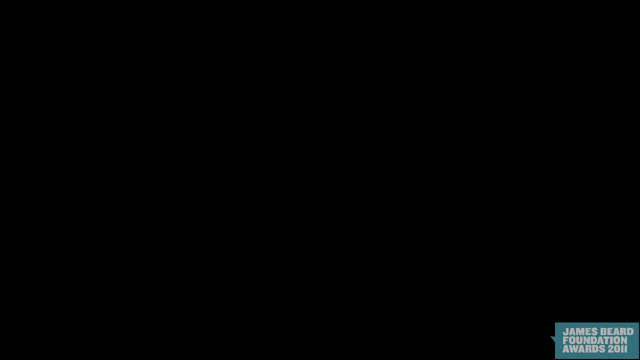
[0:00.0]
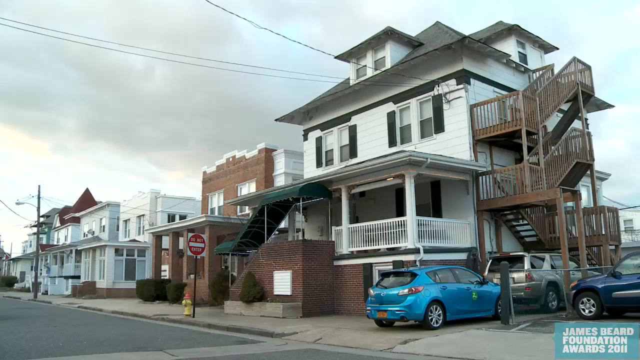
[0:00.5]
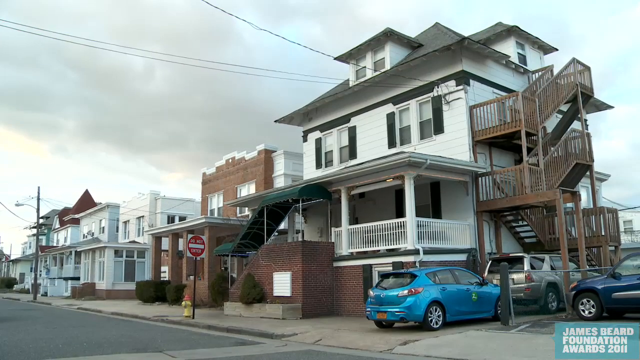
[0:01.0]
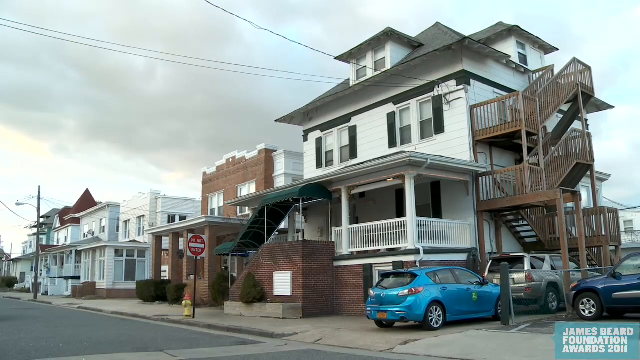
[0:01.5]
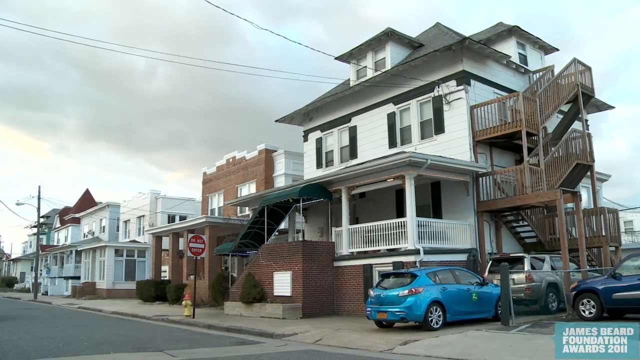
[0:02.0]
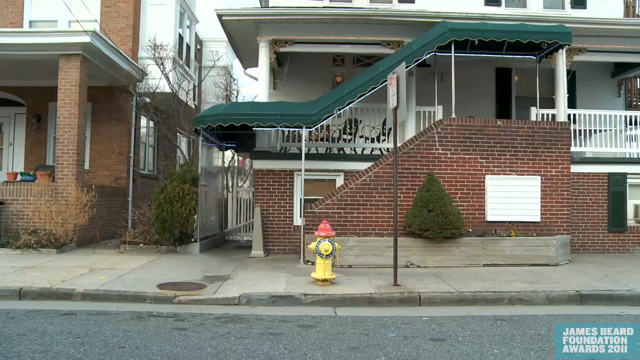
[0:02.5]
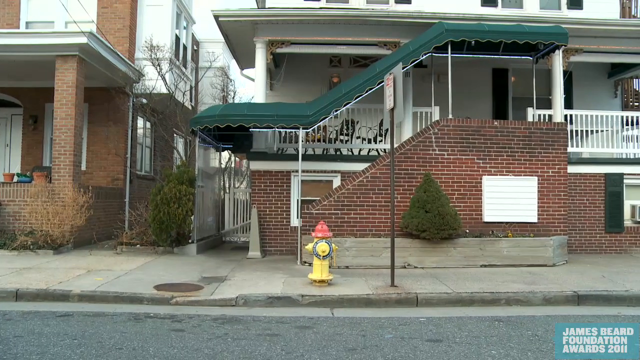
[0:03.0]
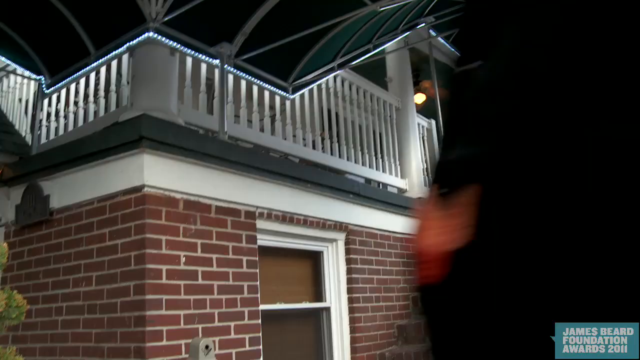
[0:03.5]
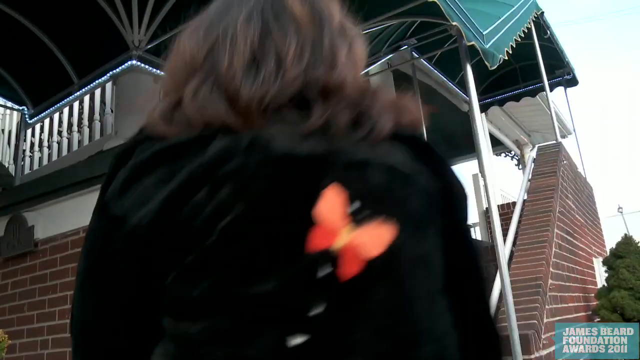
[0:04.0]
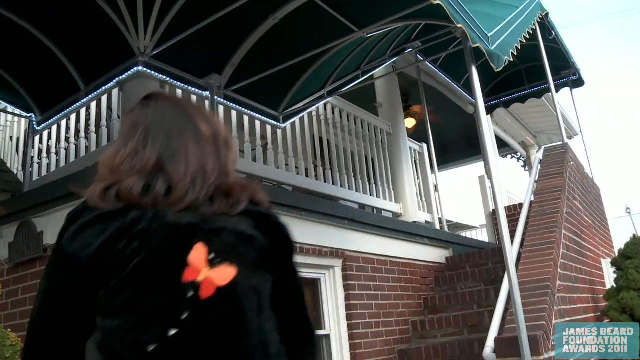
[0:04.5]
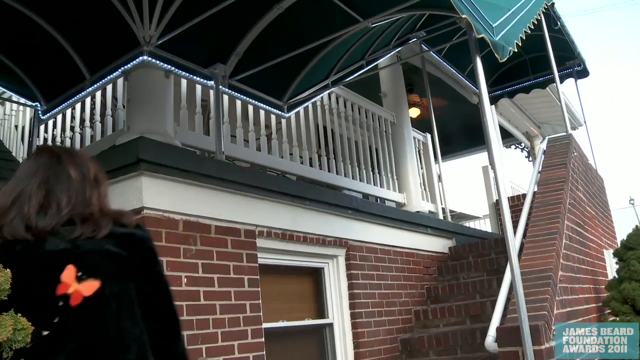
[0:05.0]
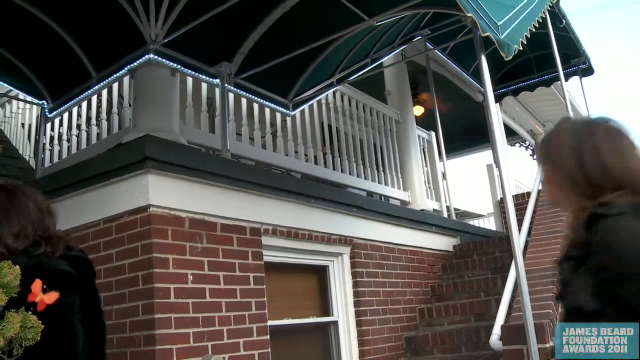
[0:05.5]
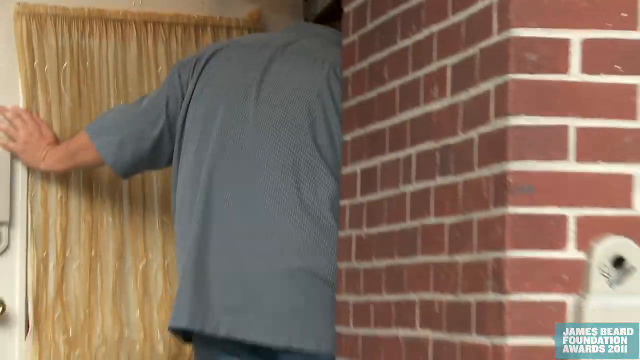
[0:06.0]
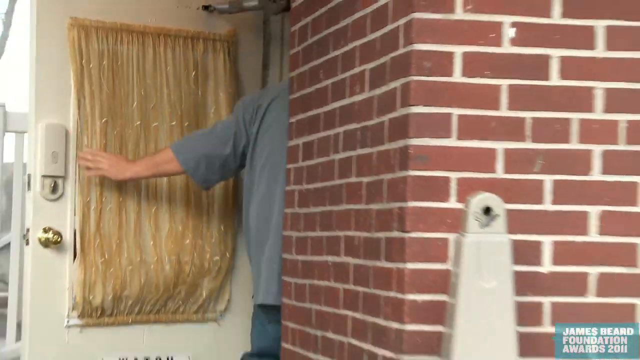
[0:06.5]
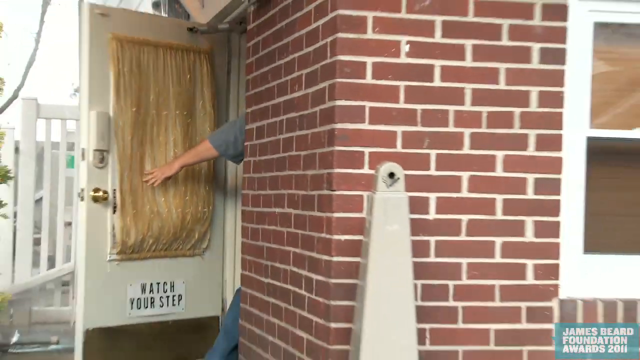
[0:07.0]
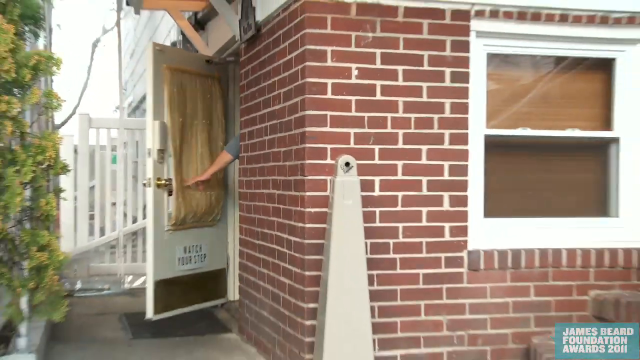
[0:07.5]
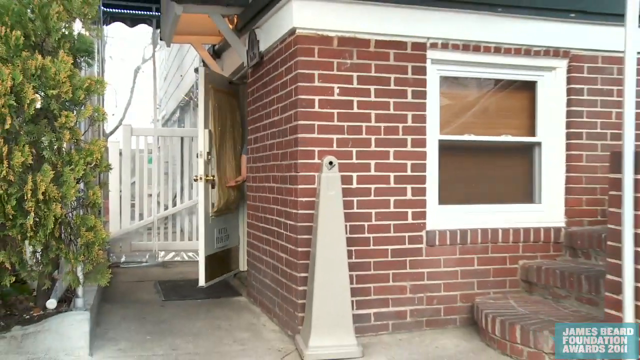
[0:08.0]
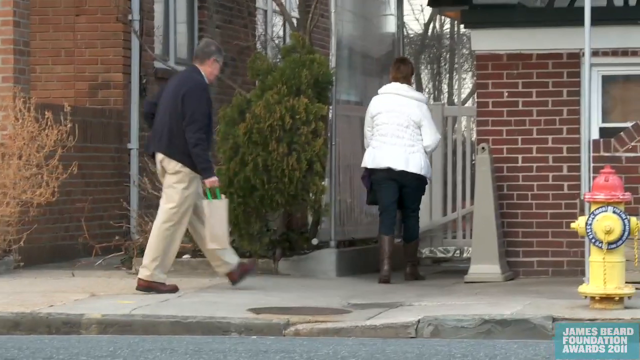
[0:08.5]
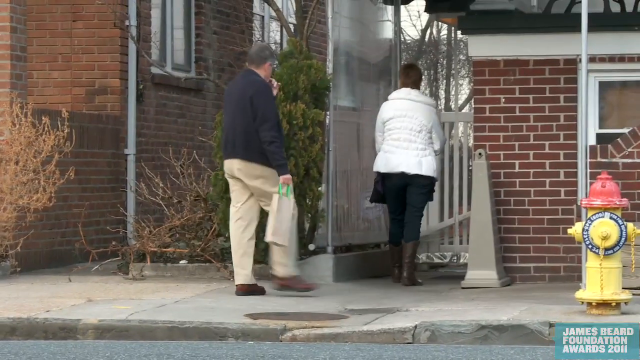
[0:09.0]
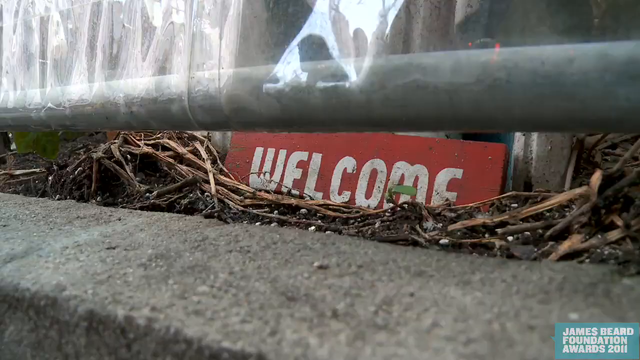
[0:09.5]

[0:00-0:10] The camera zooms in on a two-storey apartment building with three vehicles parked in: a black one, a blue one and a white one. Along the same row there is an extension of buildings. The view changes to the ground floor of the building, then a close-up shows a woman dressed in black walking toward the building's entrance. Another woman appears, and the camera zooms in on a man getting inside the room and closing the door behind him. The camera then zooms in on two other people, a woman in a white jacket and a man in a black blazer, who are also gazing toward the room. A tag reading "Welcome" appears.